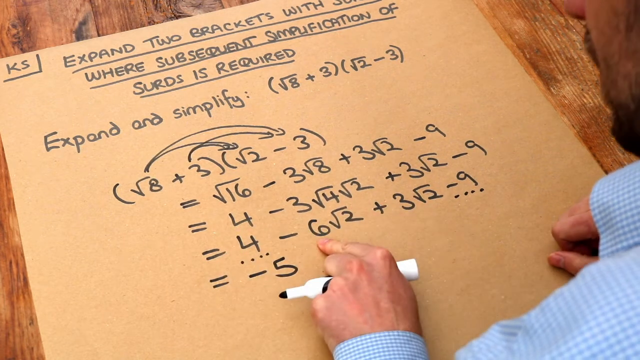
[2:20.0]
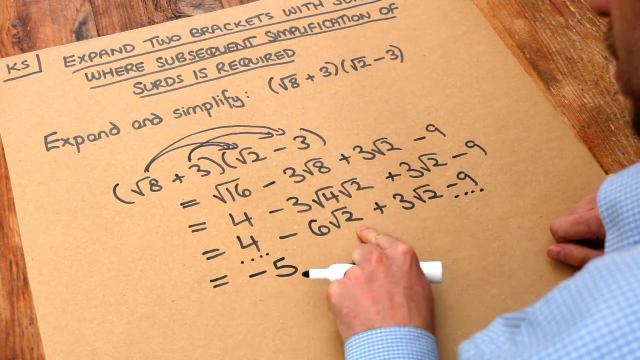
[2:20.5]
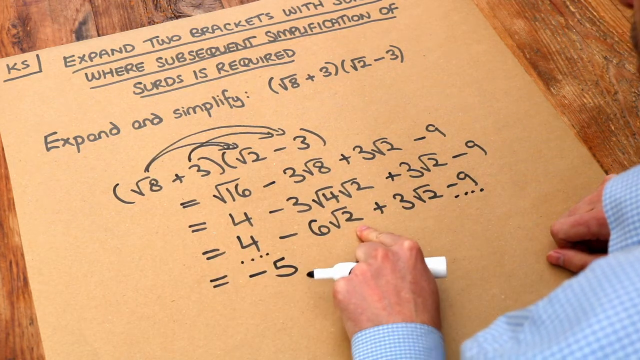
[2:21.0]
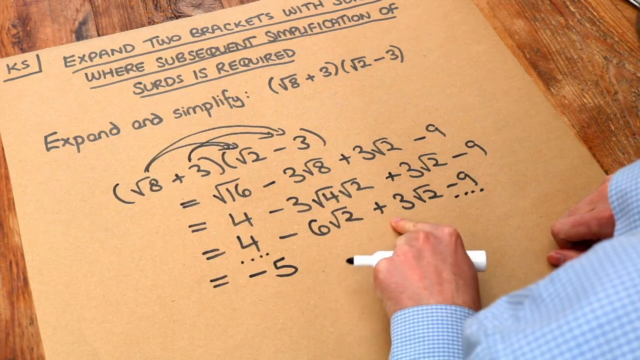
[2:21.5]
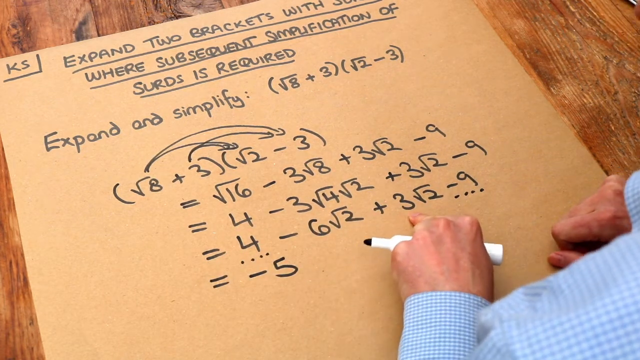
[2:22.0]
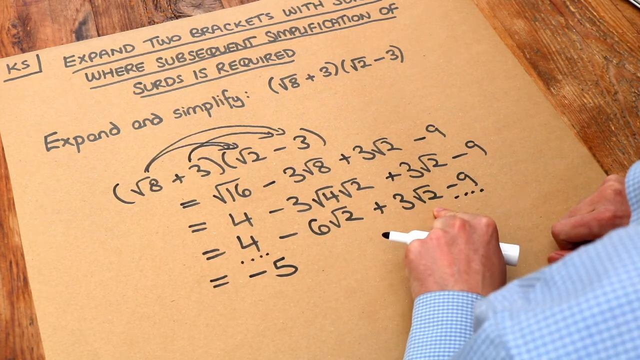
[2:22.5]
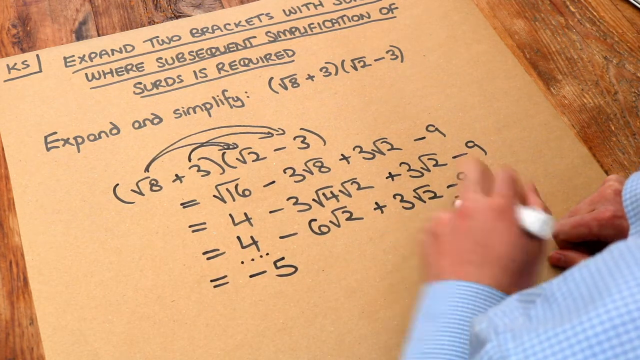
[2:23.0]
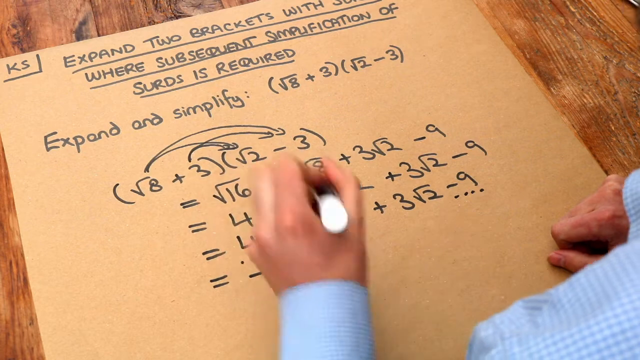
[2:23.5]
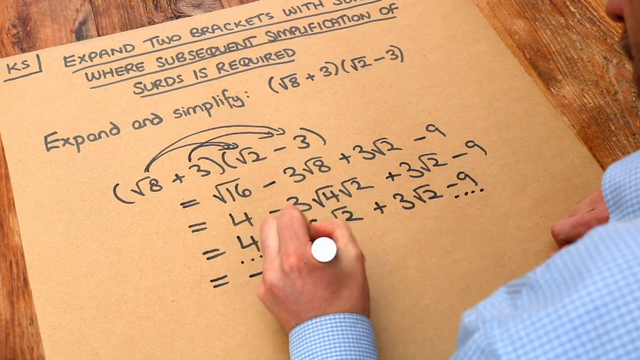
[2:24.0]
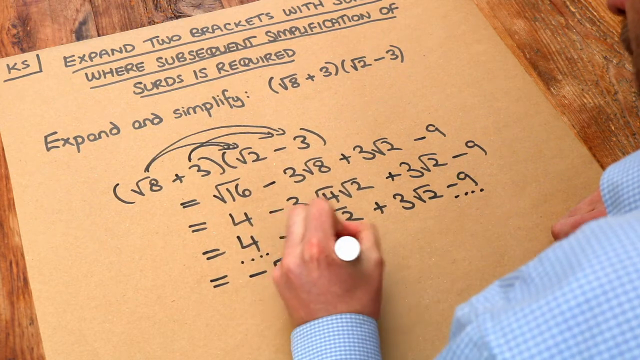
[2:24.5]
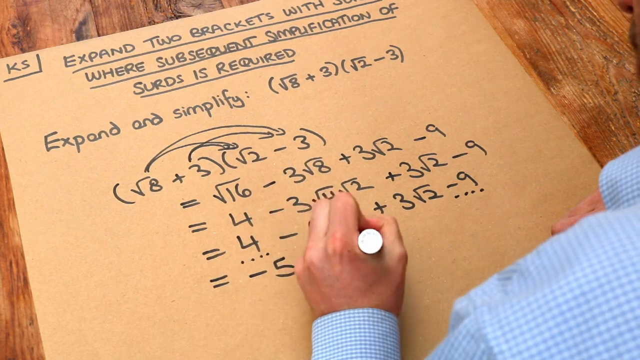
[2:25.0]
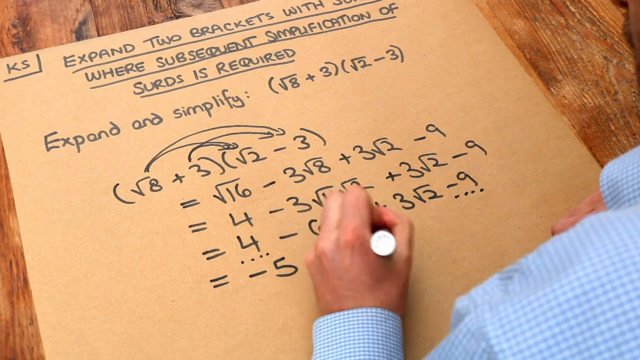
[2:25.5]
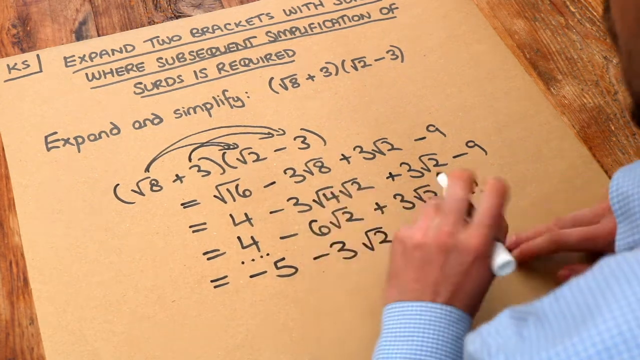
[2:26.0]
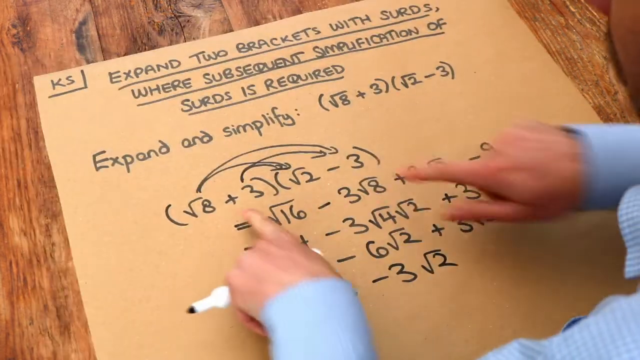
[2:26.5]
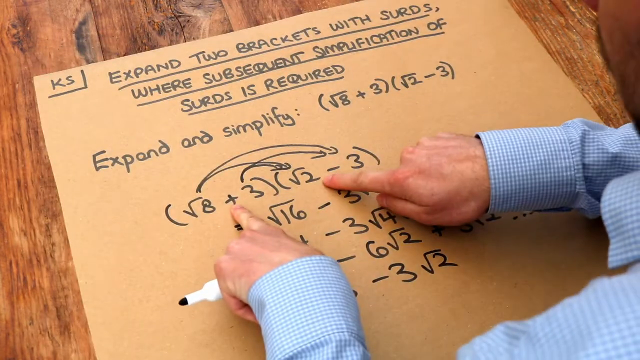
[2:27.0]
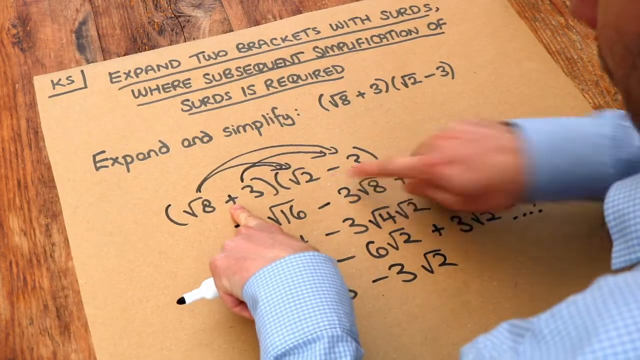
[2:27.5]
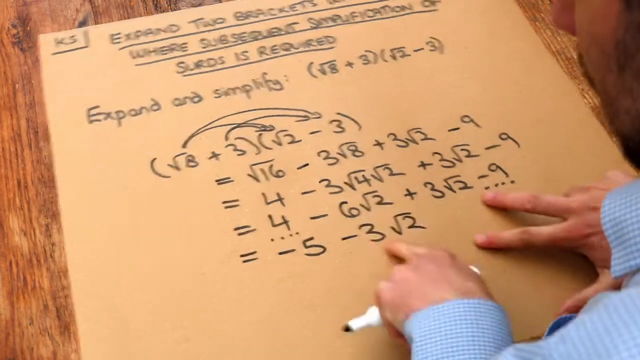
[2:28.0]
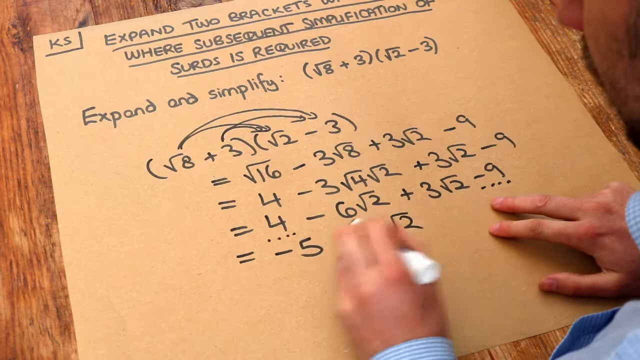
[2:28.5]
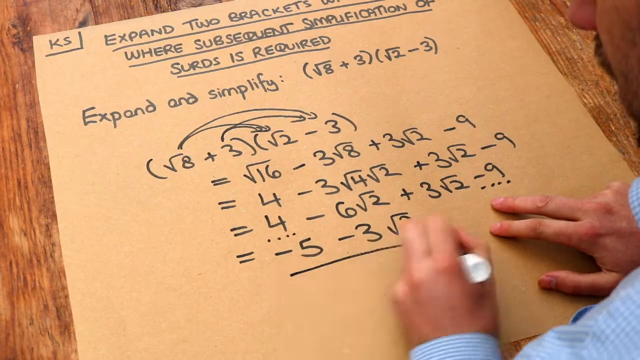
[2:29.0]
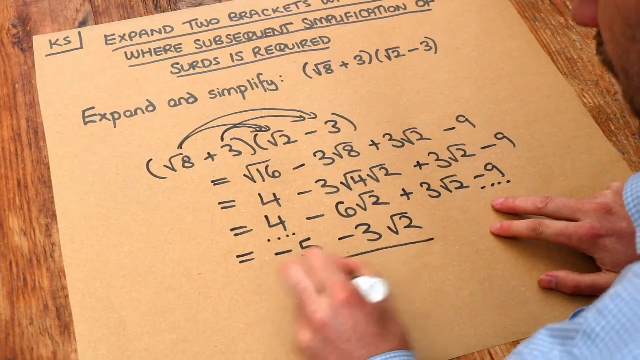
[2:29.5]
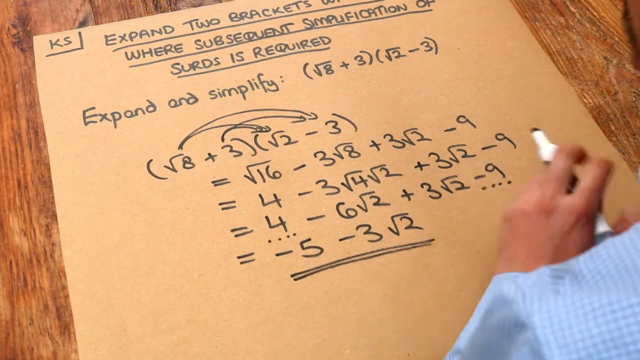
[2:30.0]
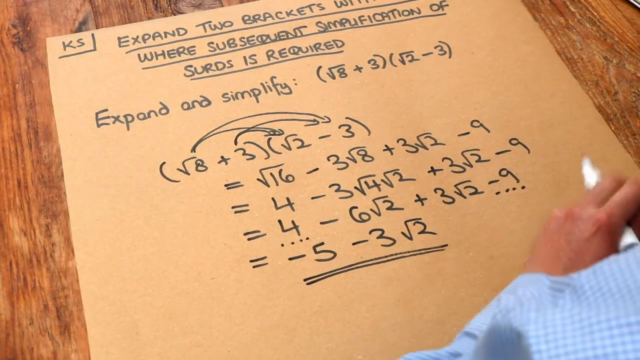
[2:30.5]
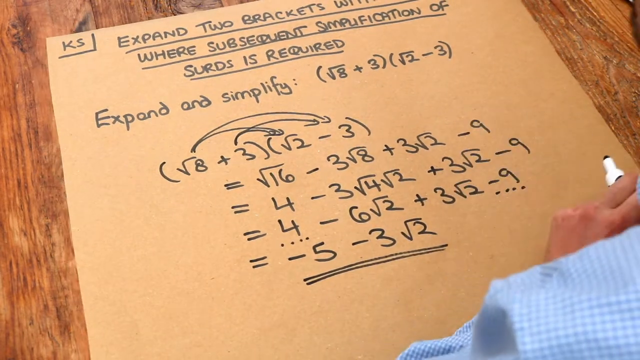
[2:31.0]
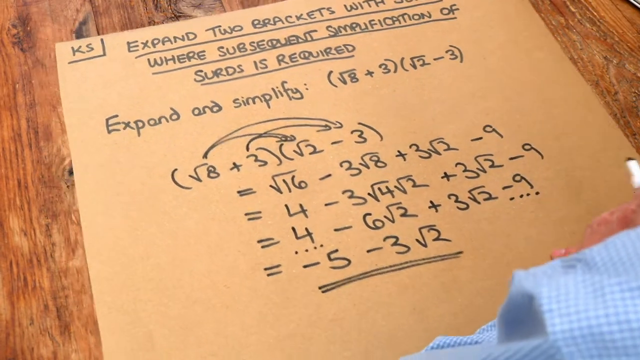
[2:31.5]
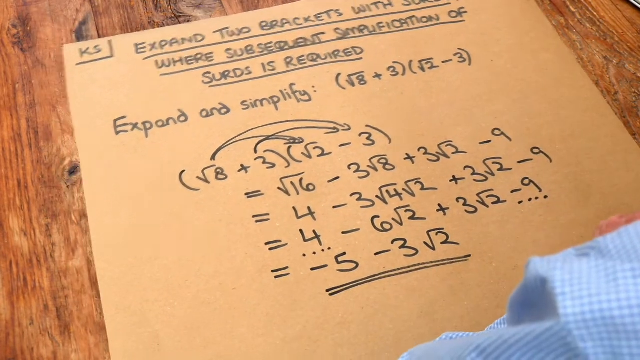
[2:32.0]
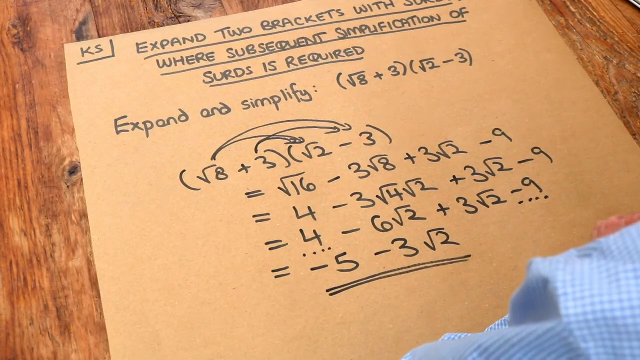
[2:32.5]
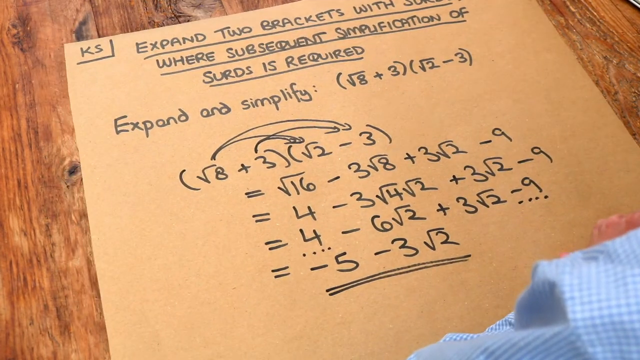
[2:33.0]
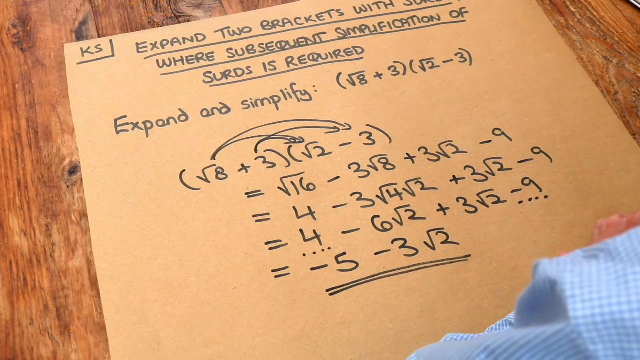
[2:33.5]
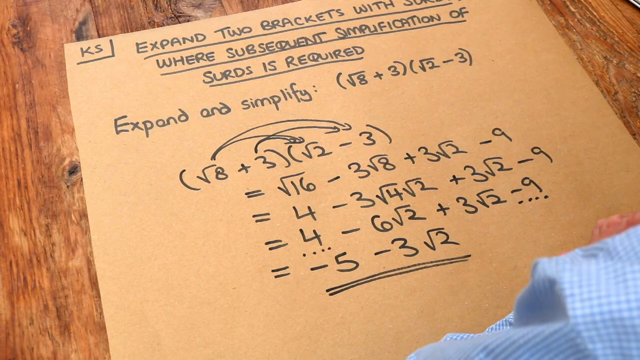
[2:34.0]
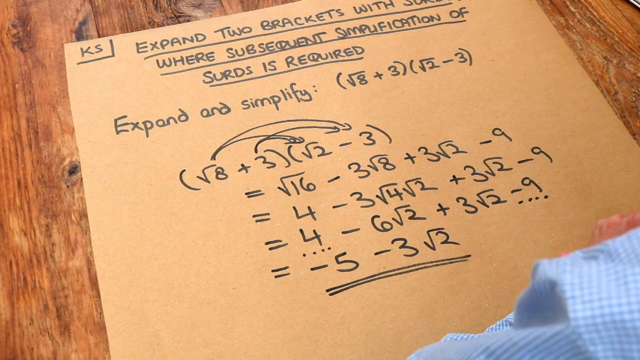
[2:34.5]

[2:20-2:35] He points at the negative 6, the square root of 2 and the plus, and writes minus 5 minus 3 square root of 2. He moves the cardboard just a very little, then moves his left pointer finger up to the plus on the top line, which says square root of 8 plus 3, while his right pointer finger points at the square root of 2. He moves his hands back down and underlines the minus 5 minus 3 square root of 2. To the right, part of his right hand shows, with the pointer and middle fingers sticking out, the thumb laying flat and a little of the back of the knuckles. He then double underlines the minus 5 minus 3 square root of 2. His hands go back down to the left, barely visible, and he pulls the cardboard back down a little. Only the edge of his left hand, with the ring and pinky finger knuckles, remains visible; the right hand is no longer visible, his face is off the side of the screen, and just the shoulder of his shirt shows.